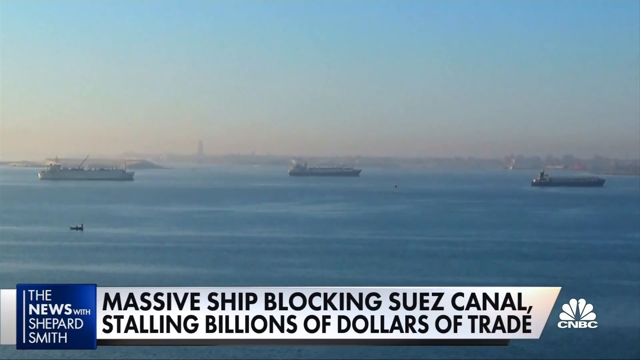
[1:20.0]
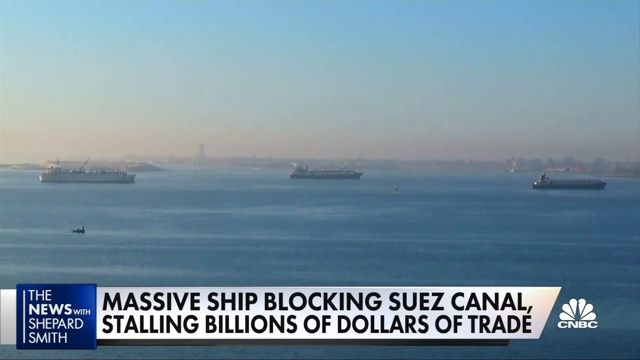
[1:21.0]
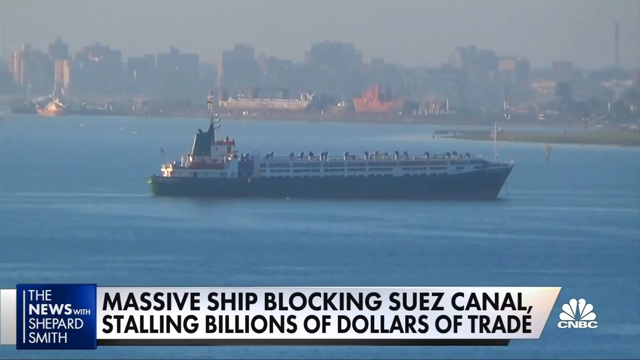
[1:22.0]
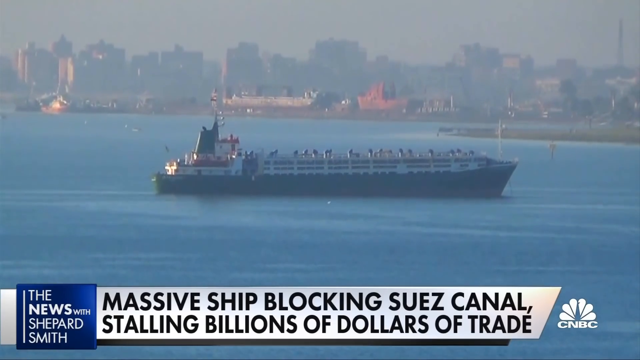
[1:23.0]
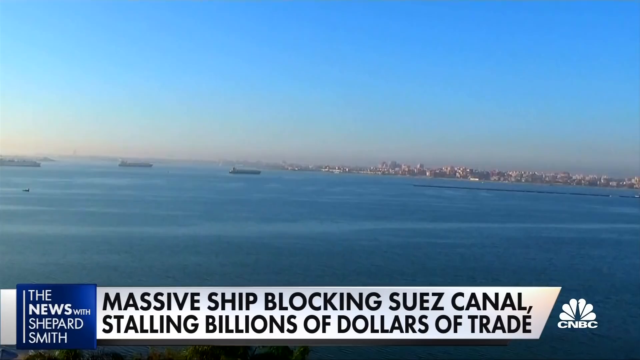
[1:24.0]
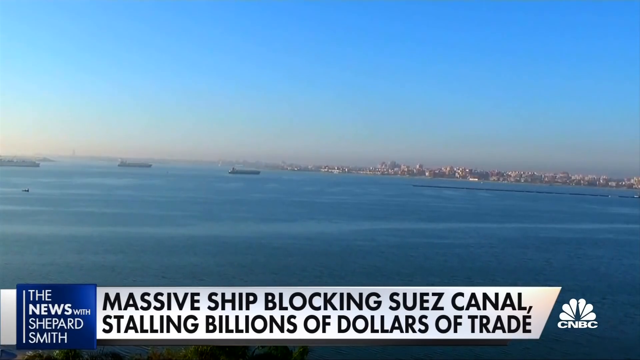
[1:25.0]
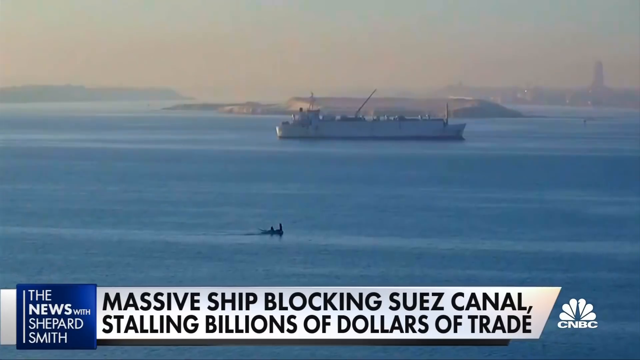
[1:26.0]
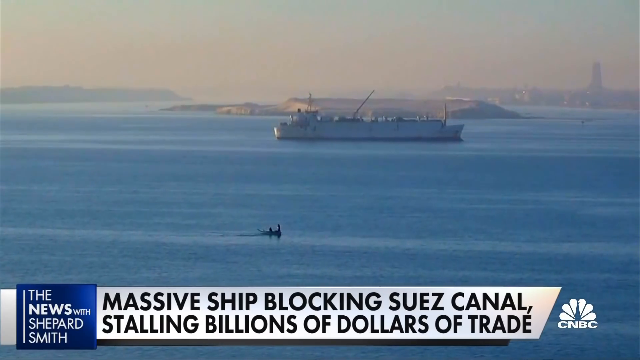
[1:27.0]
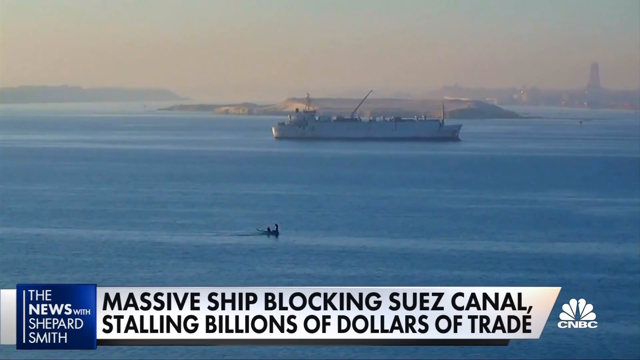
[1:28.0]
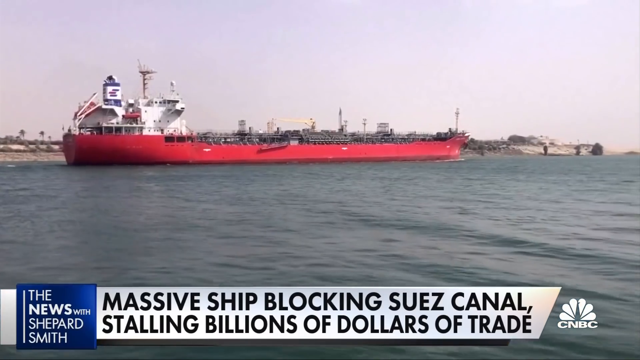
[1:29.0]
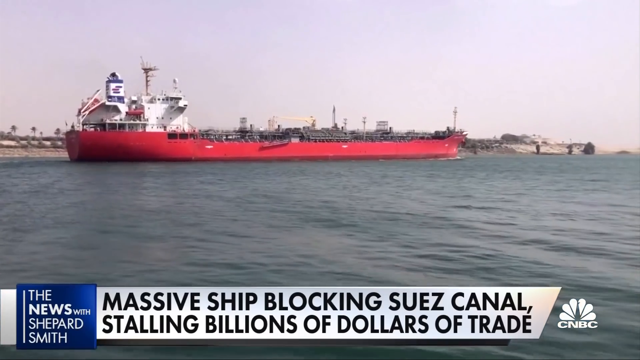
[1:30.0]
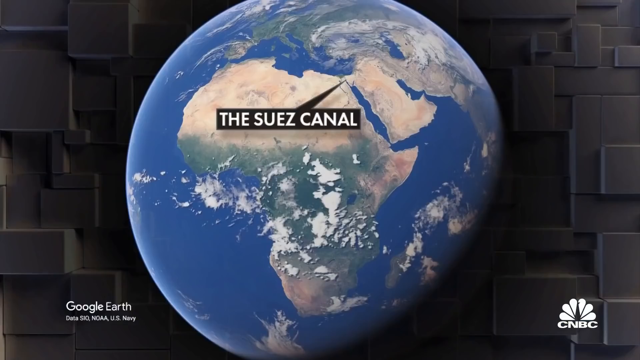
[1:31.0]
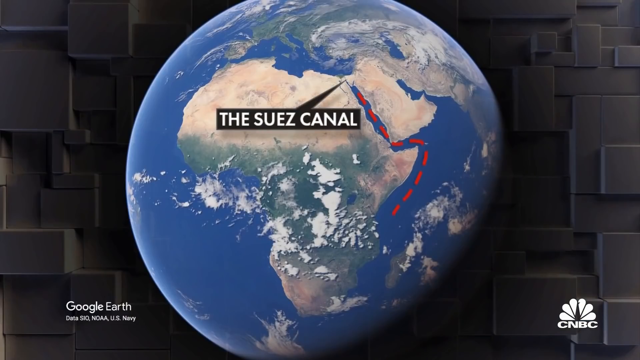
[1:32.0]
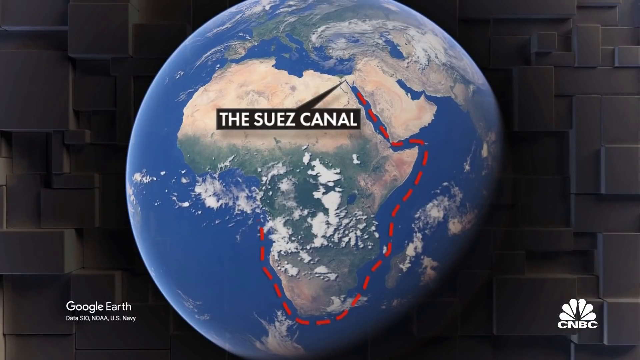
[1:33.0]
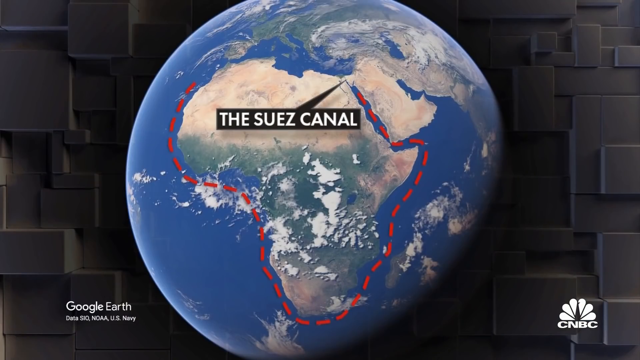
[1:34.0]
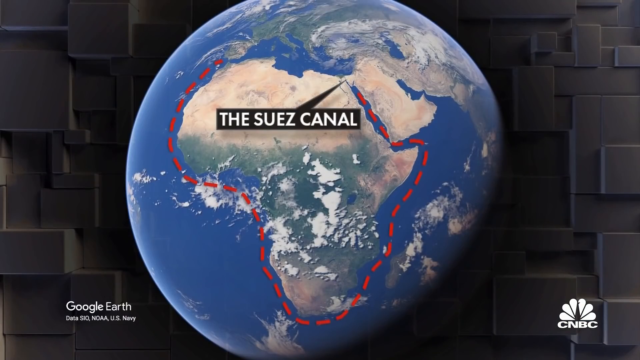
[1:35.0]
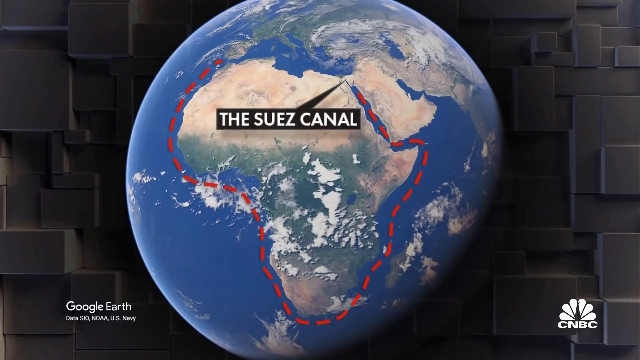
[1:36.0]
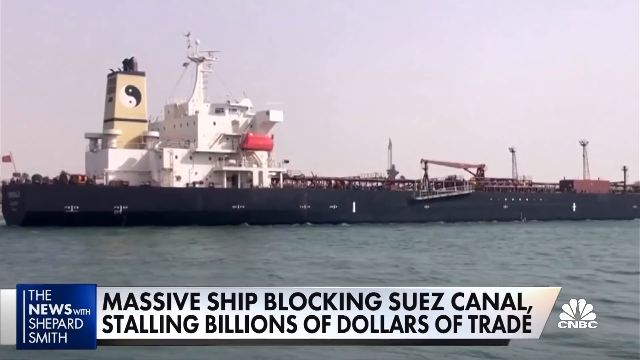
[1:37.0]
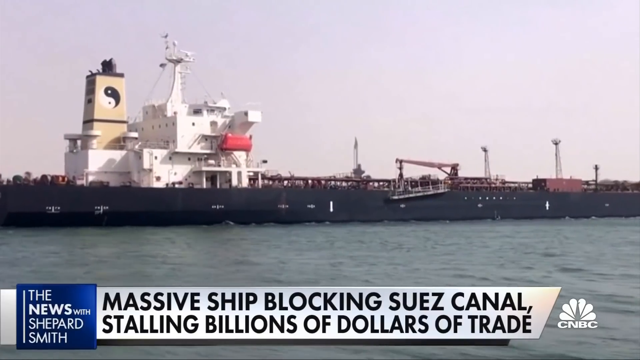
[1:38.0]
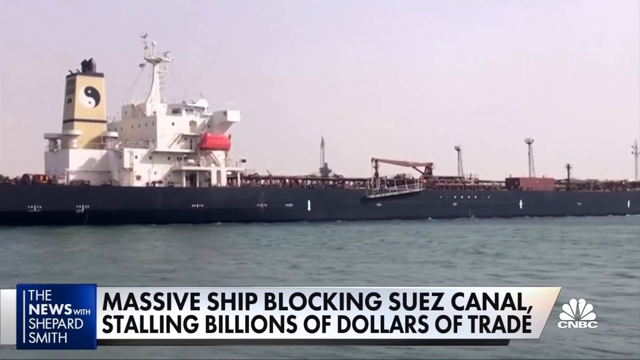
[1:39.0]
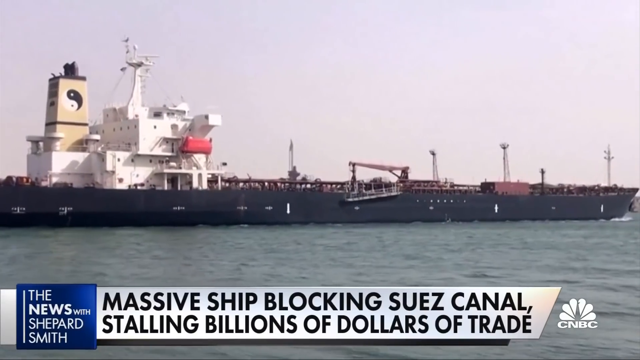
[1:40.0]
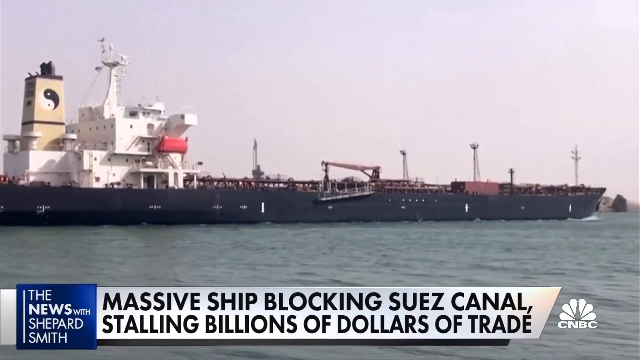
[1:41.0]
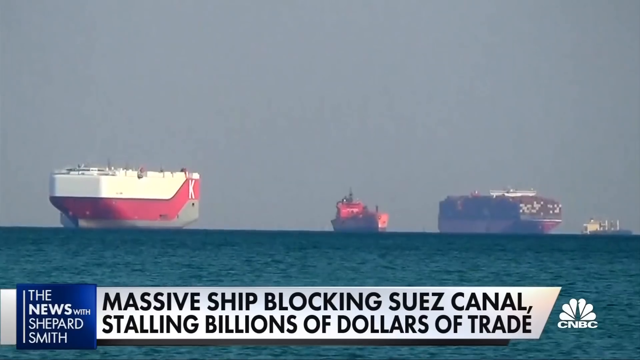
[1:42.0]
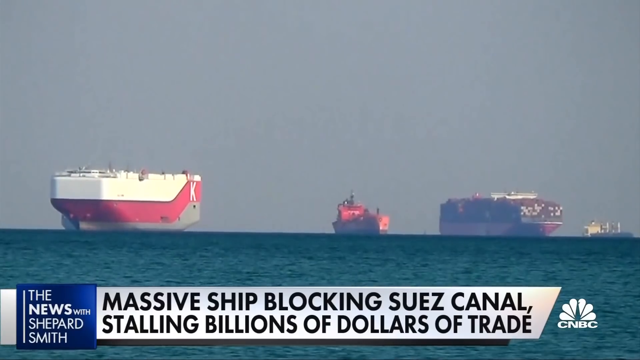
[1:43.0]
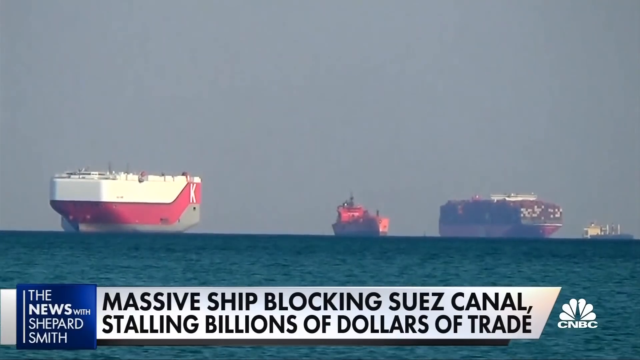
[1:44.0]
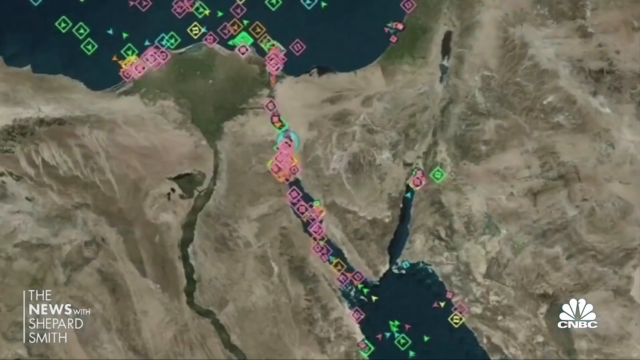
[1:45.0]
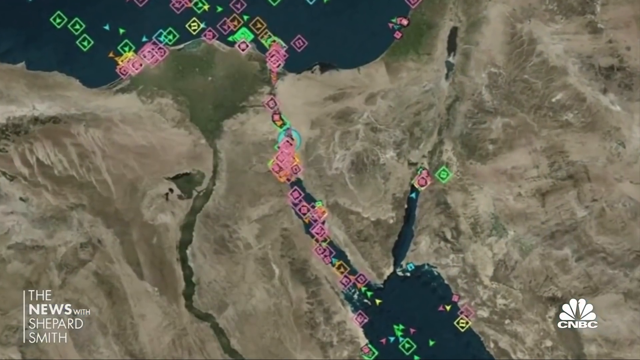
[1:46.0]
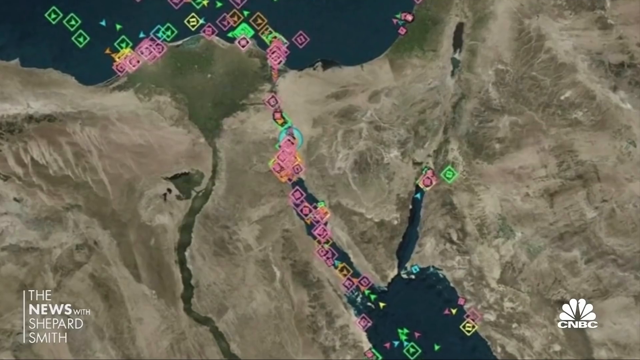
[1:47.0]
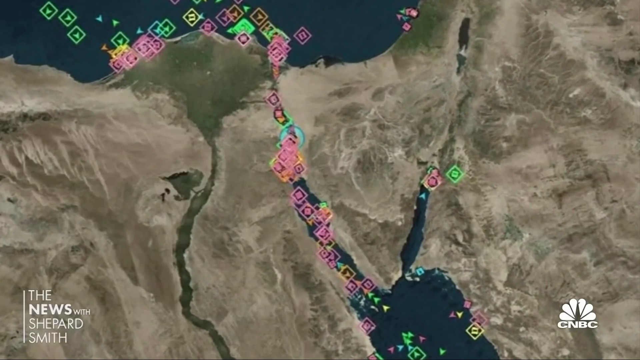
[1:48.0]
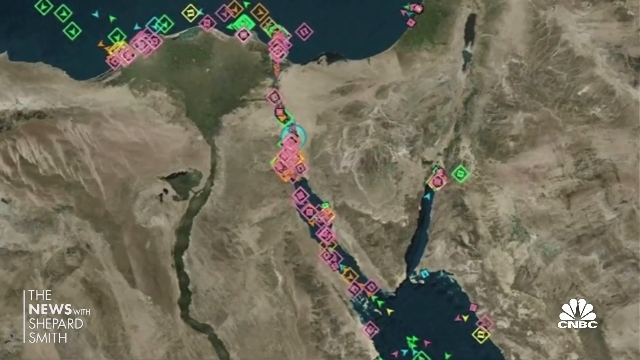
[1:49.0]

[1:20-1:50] A wide shot shows boats out on the water with a city on the right, apparently Cairo, holding for about five or six seconds. The video cuts to a big white cargo ship floating on the water, then to a red ship that looks like a tanker. Text at the bottom still refers to the massive ship blocking the Suez Canal stalling billions of dollars in trade, and the CNBC logo is in the bottom right. A view from space then points to the Suez Canal, with dots running downward showing ships or how they would travel, apparently around to Spain and Morocco. Next, a black ship on the water moves back and forth. A wide shot shows four ships: three very close up, a huge white one and two black ones, and one farther away that appears to be white and blue. Another shot shows the many ships in the area stuck waiting to pass.